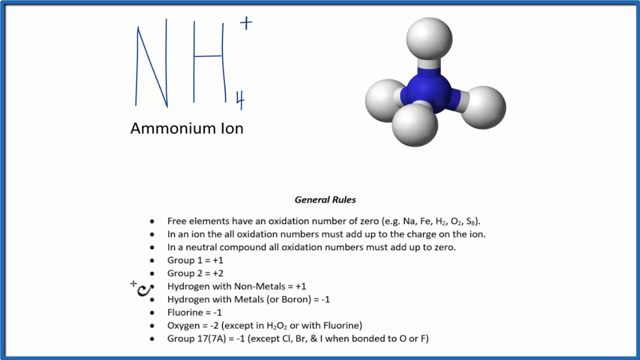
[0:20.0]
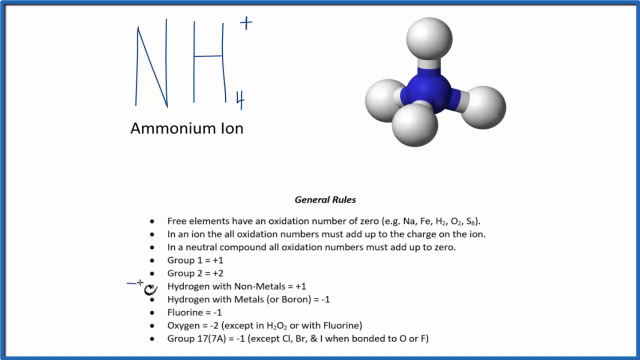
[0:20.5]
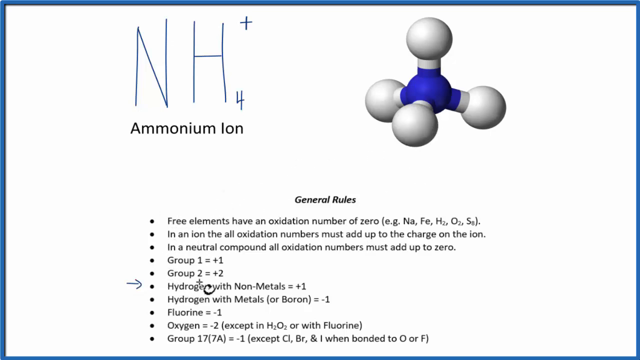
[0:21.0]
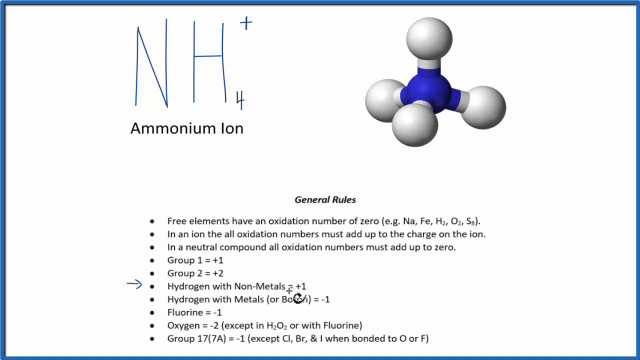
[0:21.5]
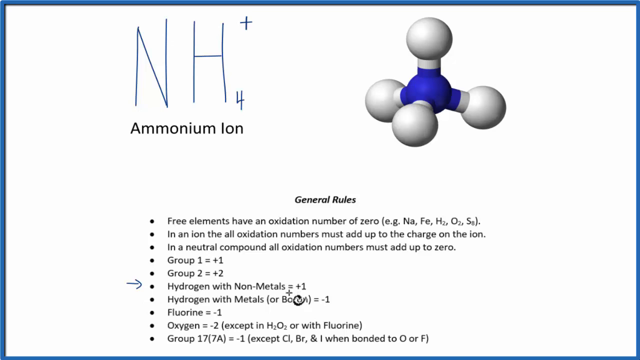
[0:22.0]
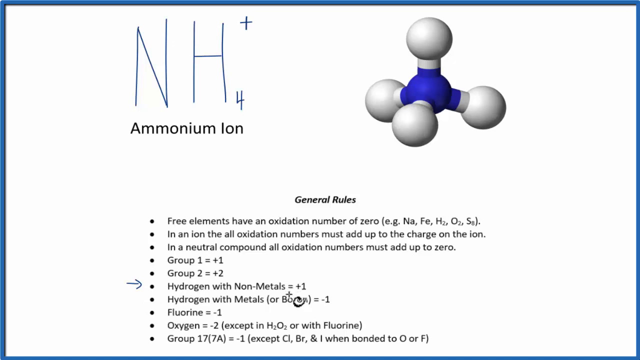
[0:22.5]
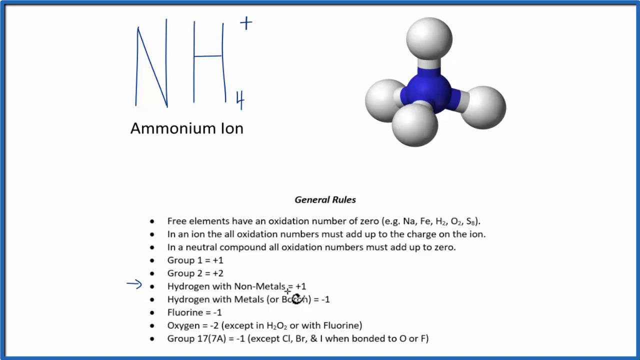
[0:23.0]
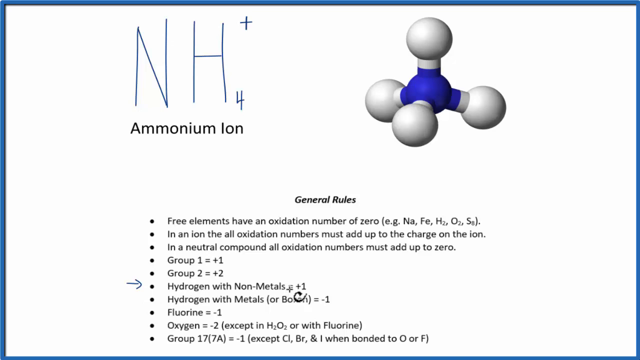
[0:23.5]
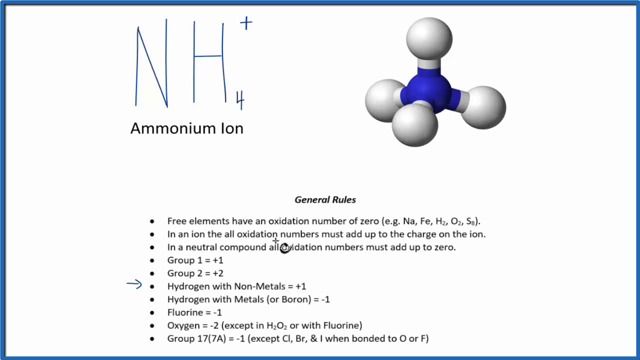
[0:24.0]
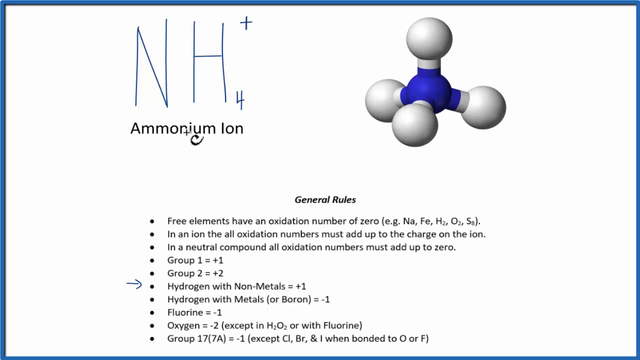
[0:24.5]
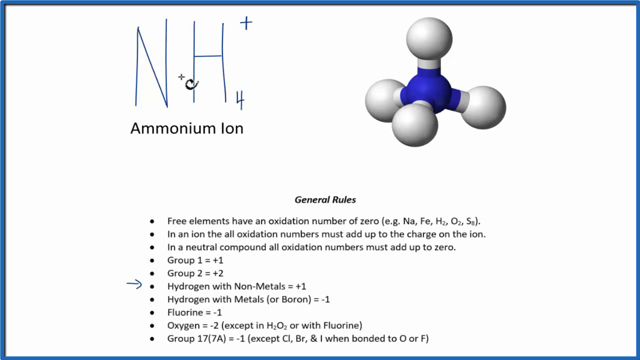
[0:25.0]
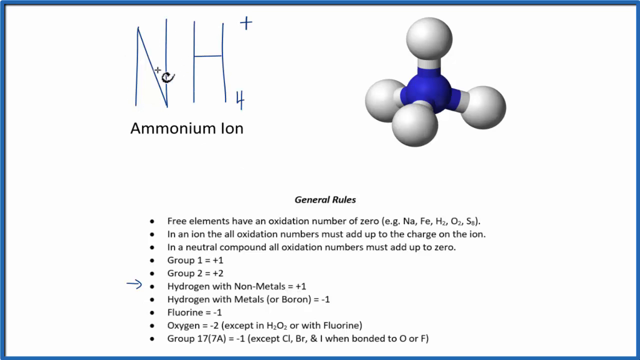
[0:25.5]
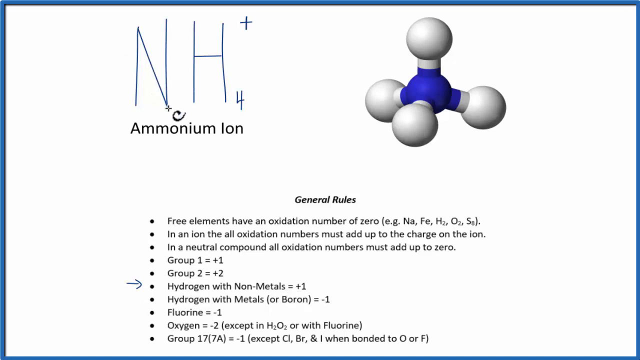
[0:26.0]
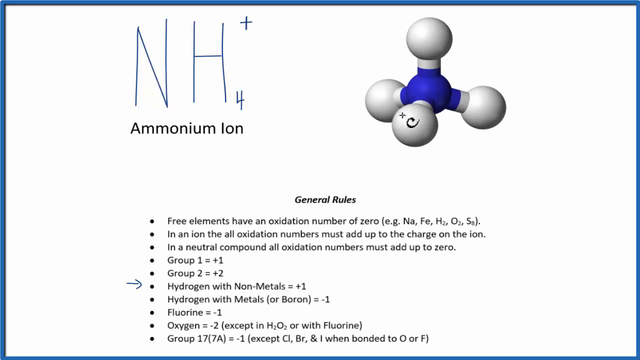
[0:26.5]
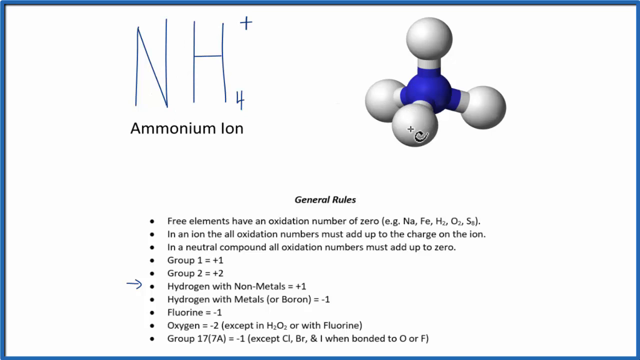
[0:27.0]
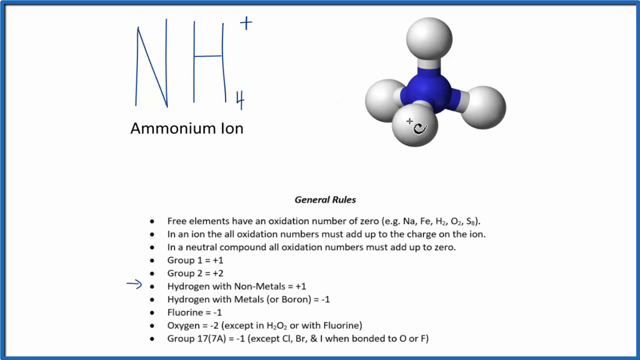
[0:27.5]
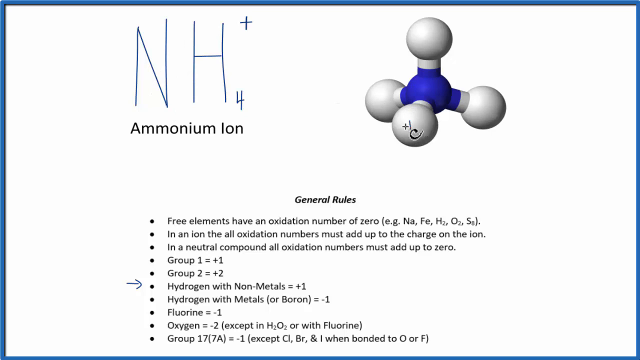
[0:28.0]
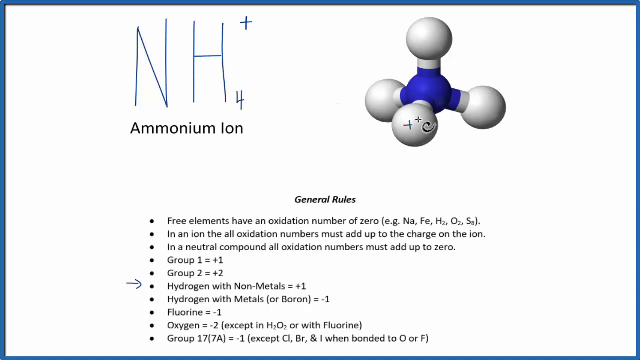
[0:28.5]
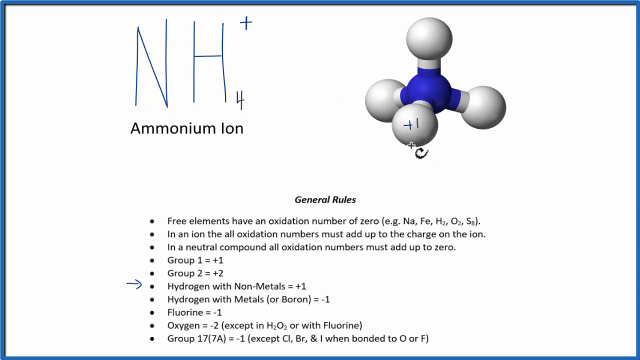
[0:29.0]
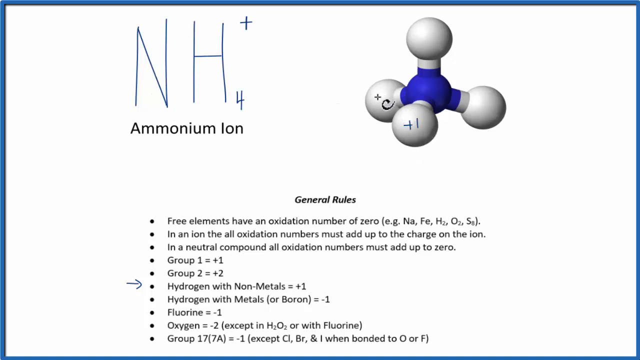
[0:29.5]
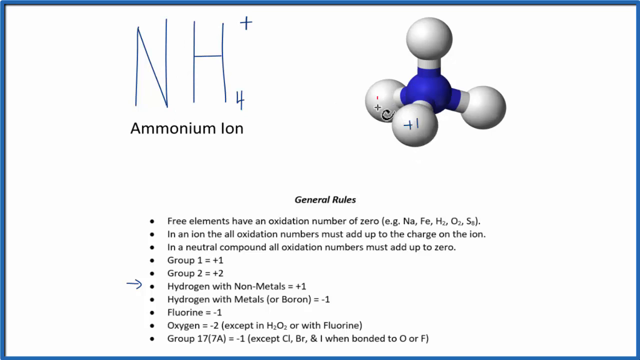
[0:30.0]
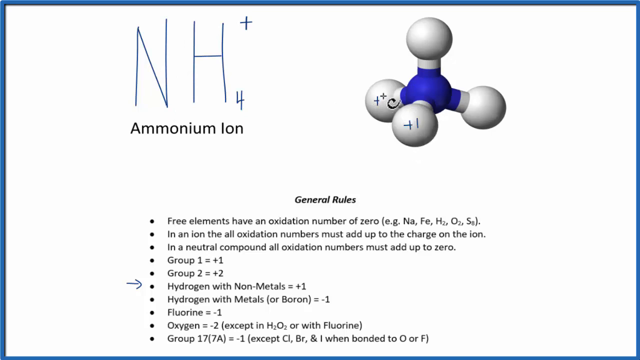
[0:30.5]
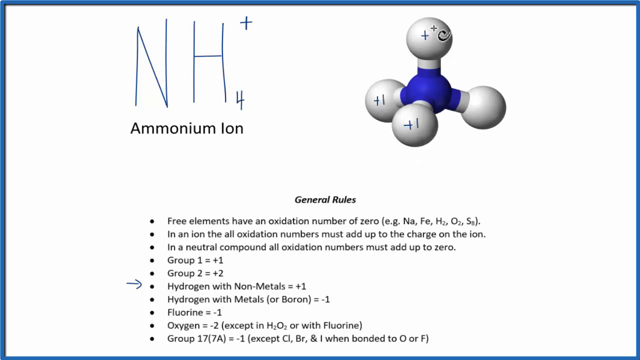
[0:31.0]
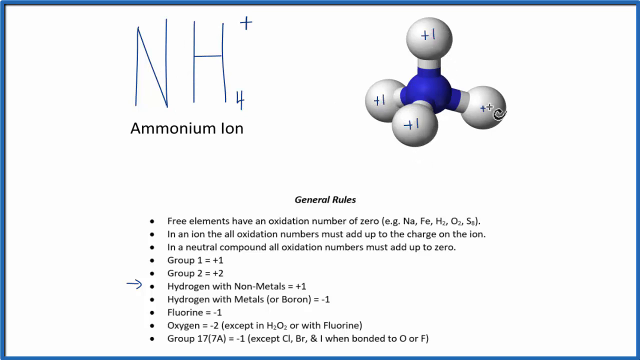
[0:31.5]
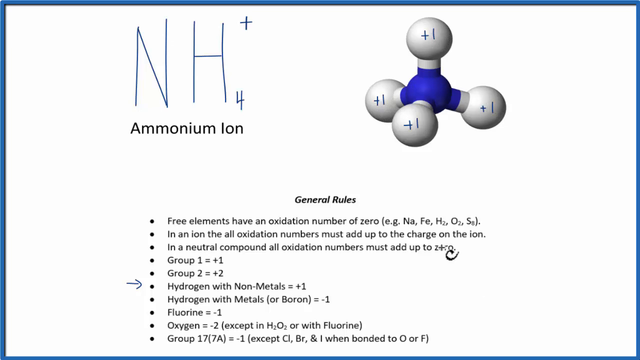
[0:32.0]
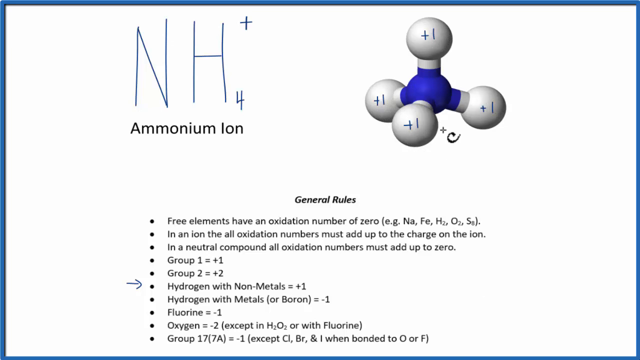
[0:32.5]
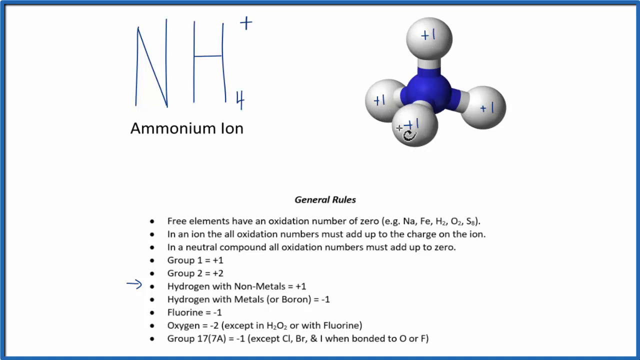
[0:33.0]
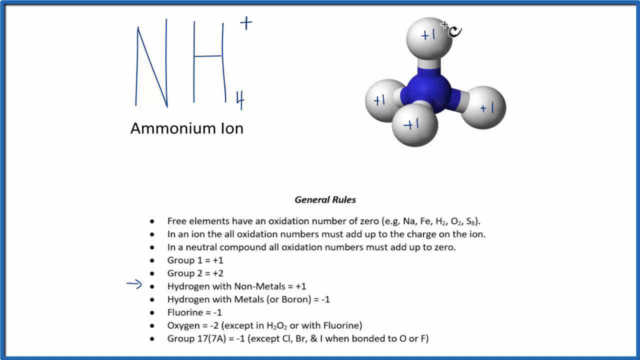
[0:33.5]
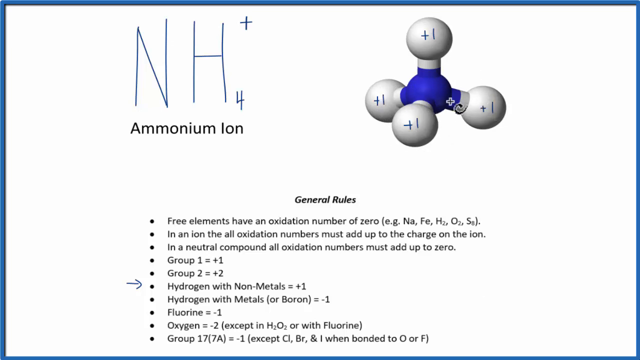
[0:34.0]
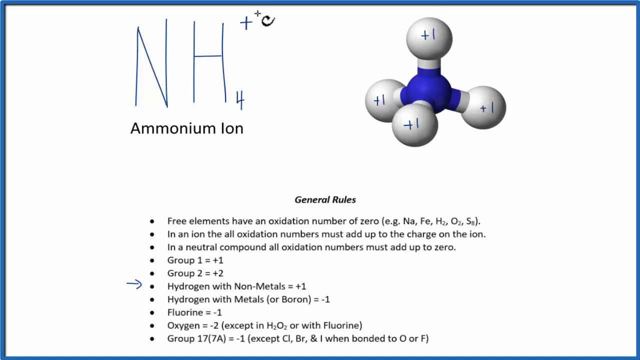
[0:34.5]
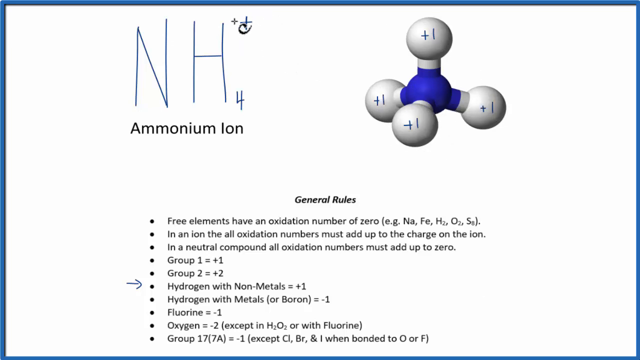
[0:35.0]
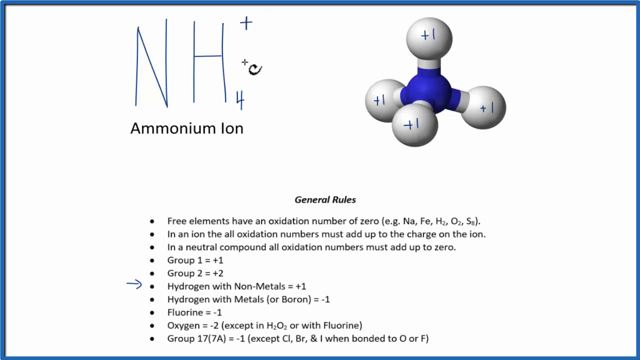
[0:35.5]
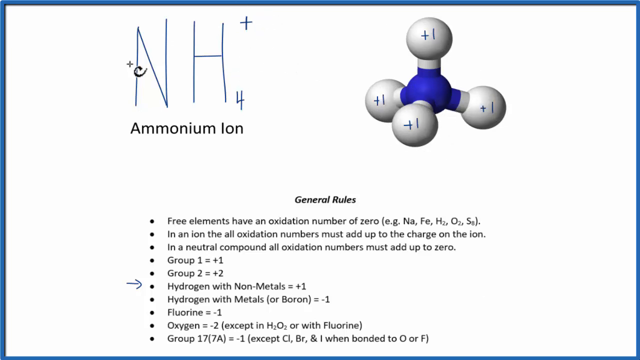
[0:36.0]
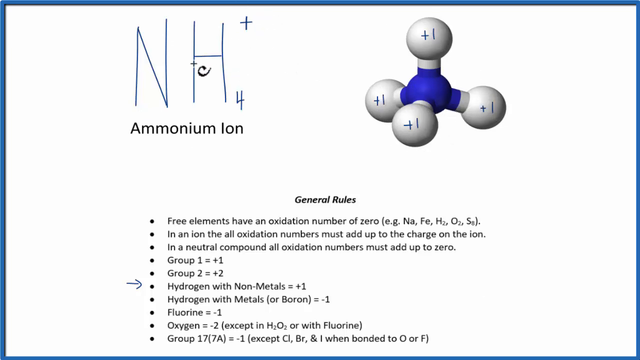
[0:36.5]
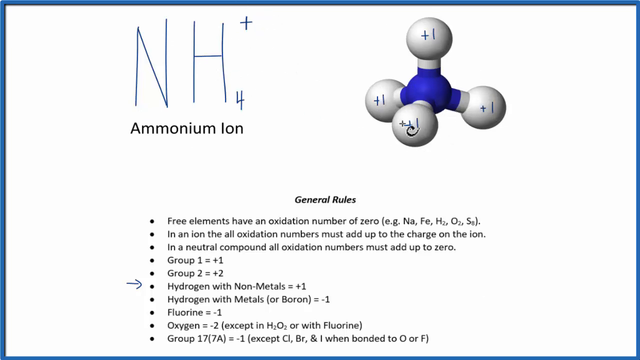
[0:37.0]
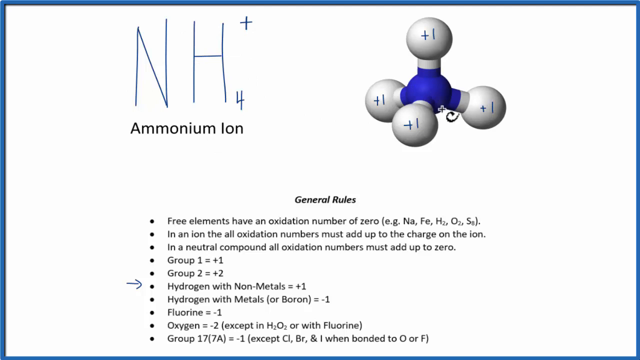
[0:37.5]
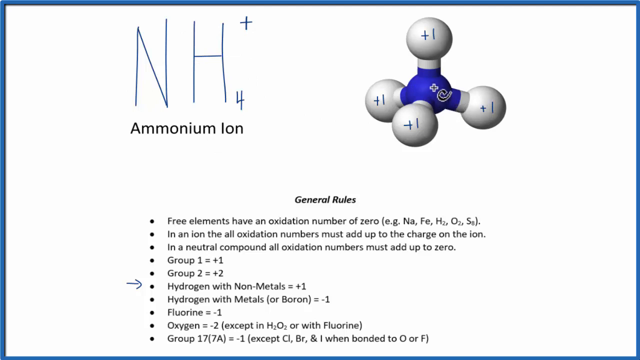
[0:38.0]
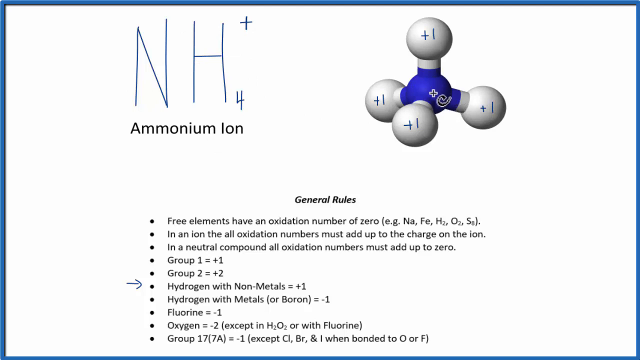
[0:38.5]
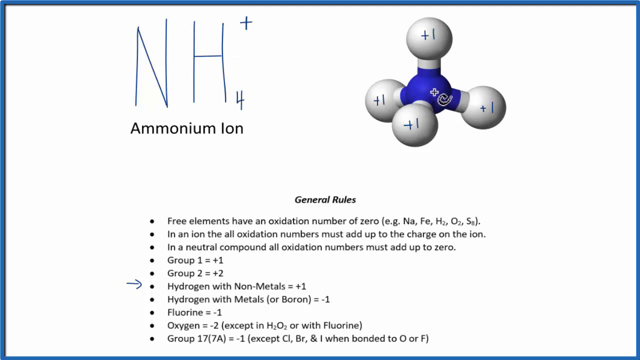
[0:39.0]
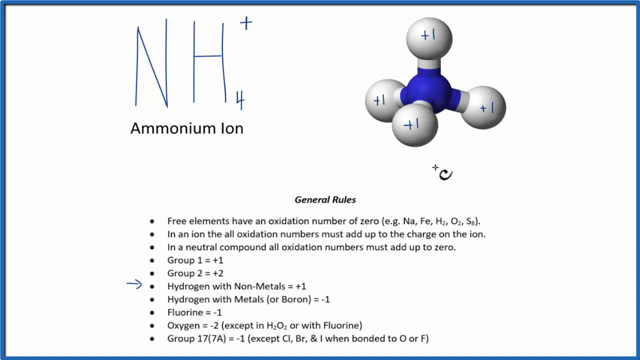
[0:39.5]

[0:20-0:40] The same slide remains on screen. The person paints an arrow to the rule "hydrogen with non-metals is equal to plus one" and shows that the balls of the ammonium ion icon apparently have plus one numbers, or some pluses, relating to the formula NH4+. These seem to correspond to the value for hydrogen with non-metals.